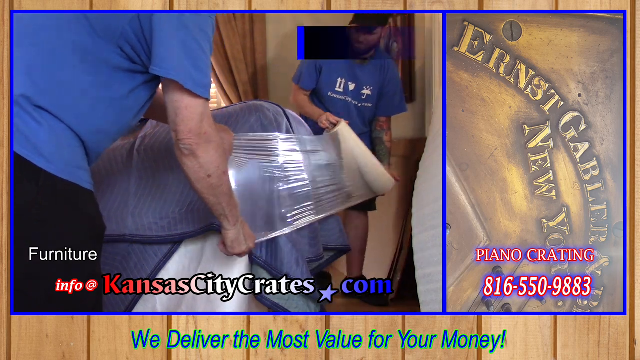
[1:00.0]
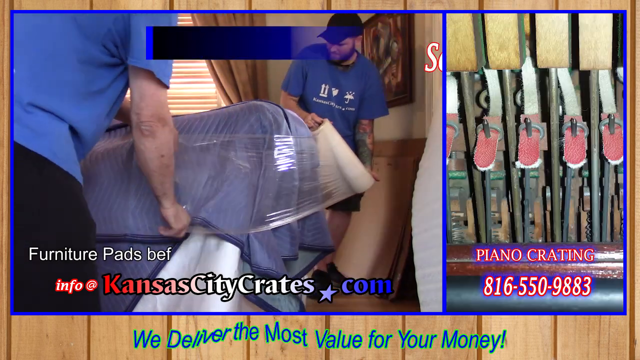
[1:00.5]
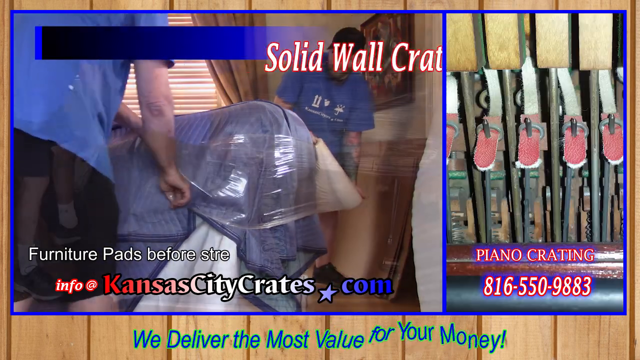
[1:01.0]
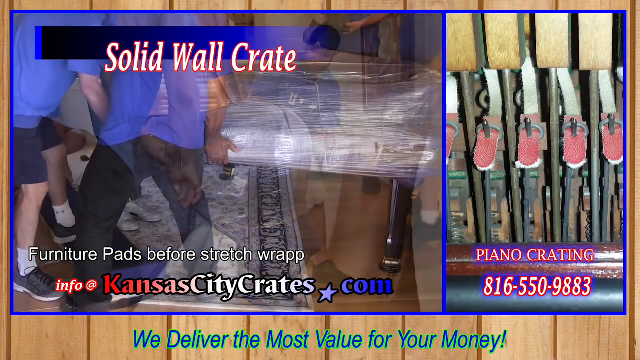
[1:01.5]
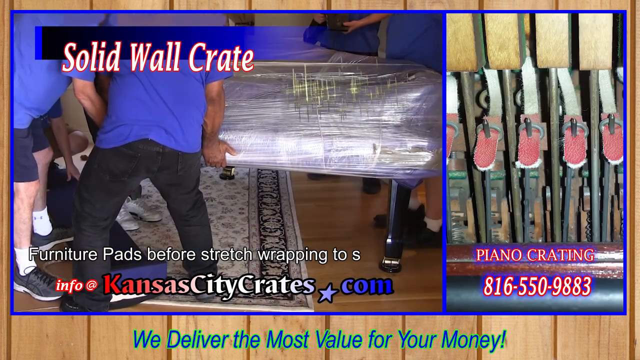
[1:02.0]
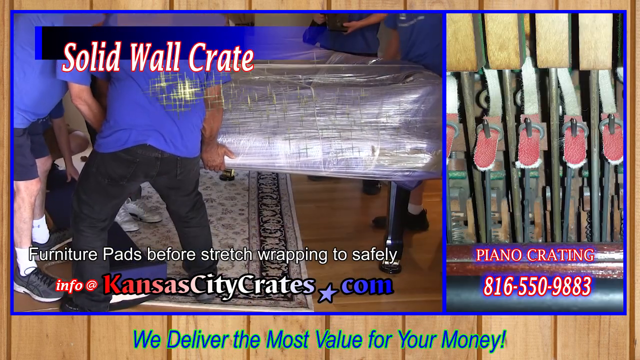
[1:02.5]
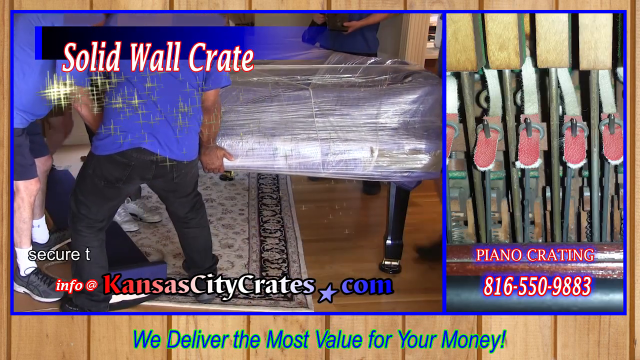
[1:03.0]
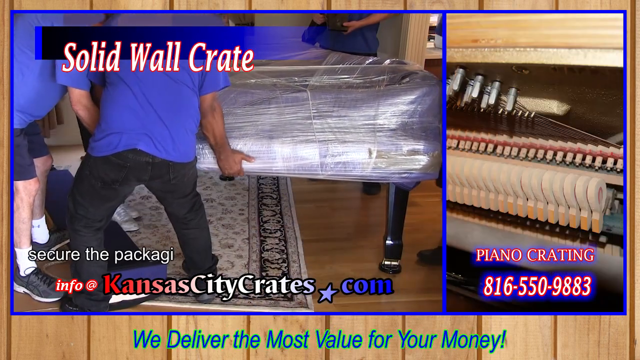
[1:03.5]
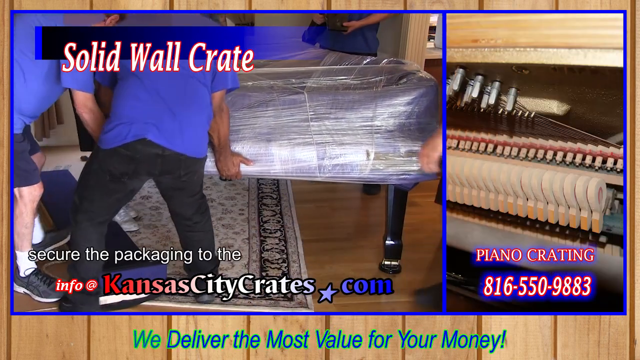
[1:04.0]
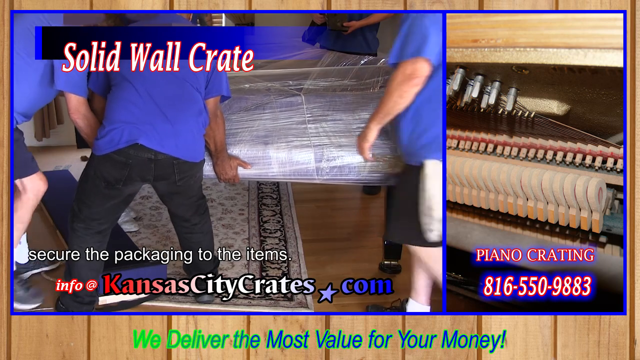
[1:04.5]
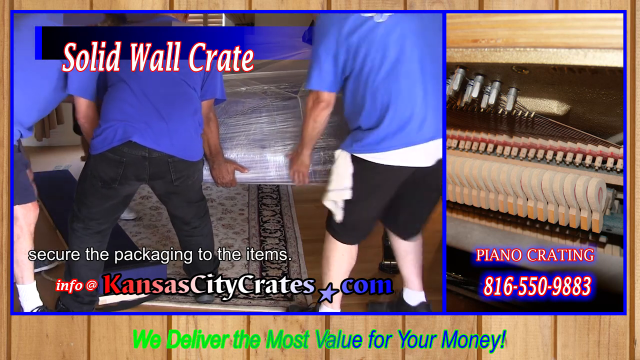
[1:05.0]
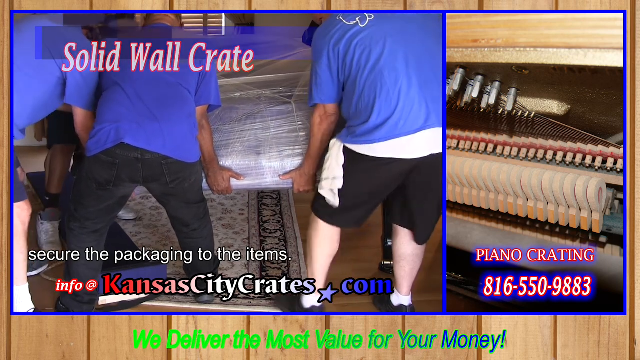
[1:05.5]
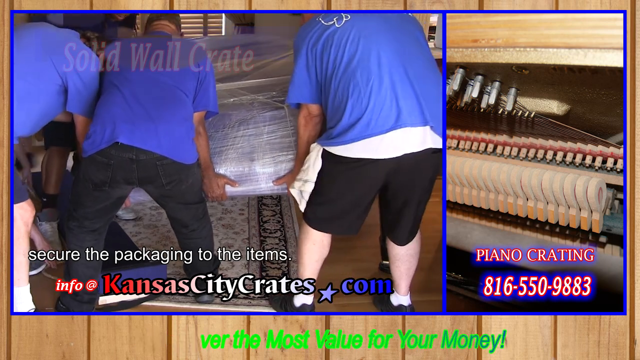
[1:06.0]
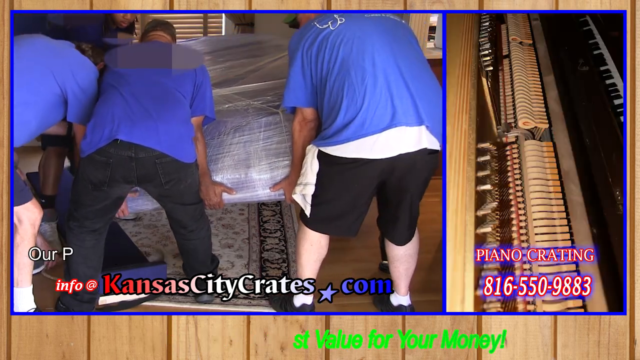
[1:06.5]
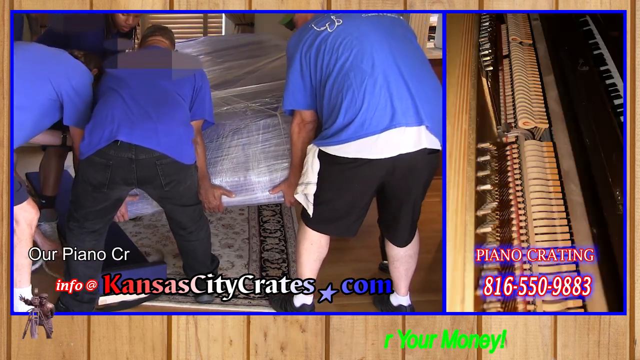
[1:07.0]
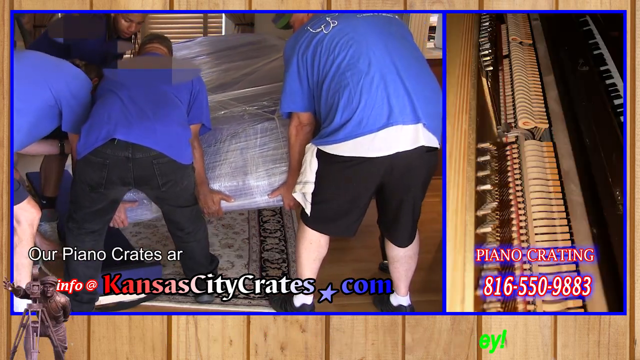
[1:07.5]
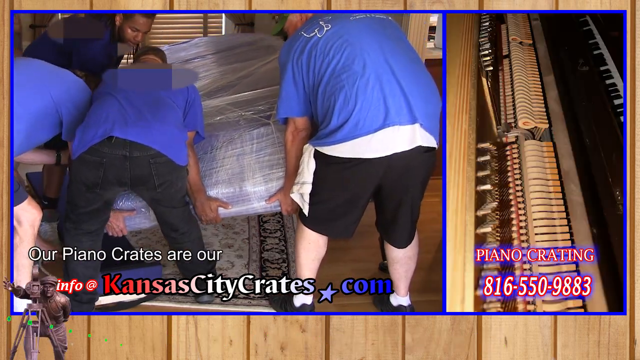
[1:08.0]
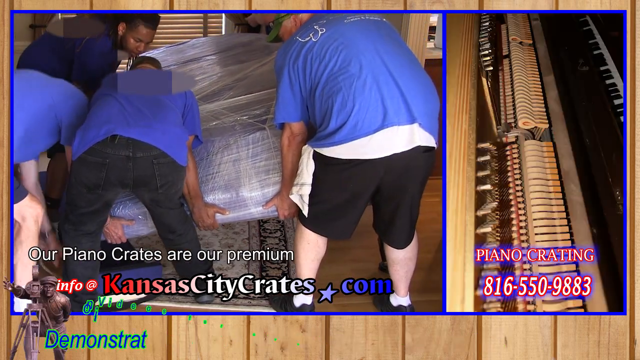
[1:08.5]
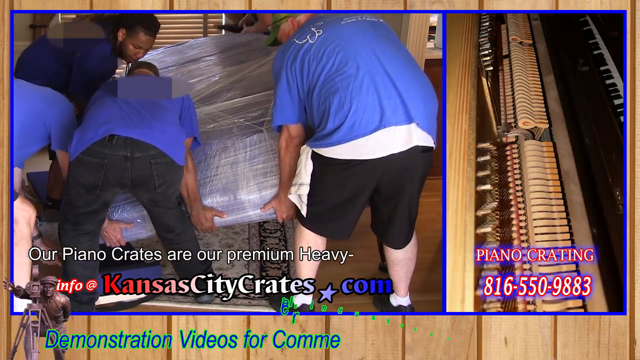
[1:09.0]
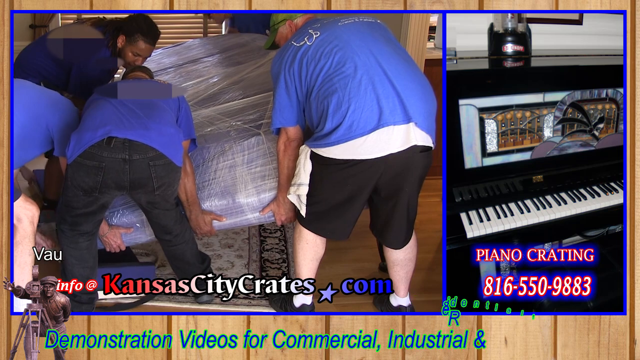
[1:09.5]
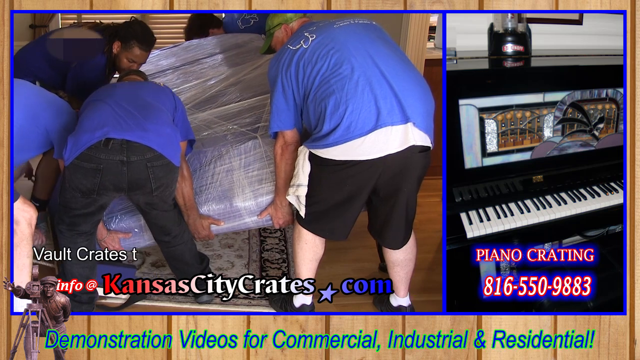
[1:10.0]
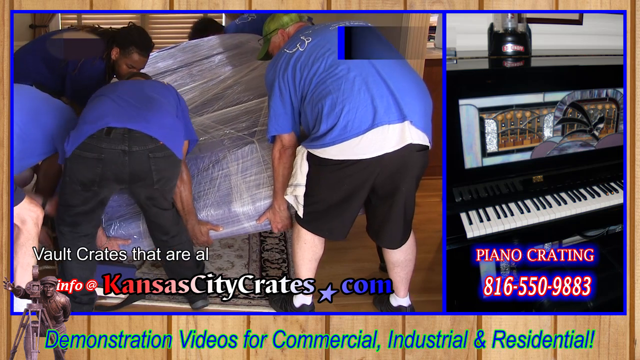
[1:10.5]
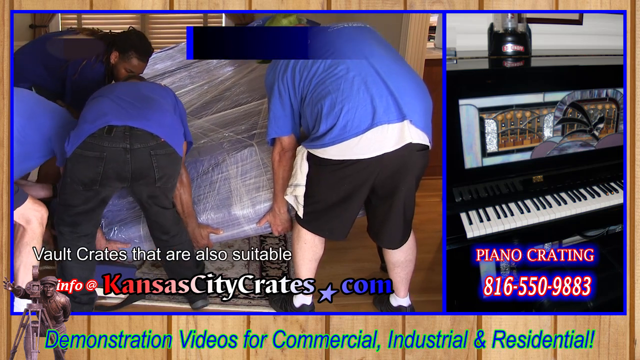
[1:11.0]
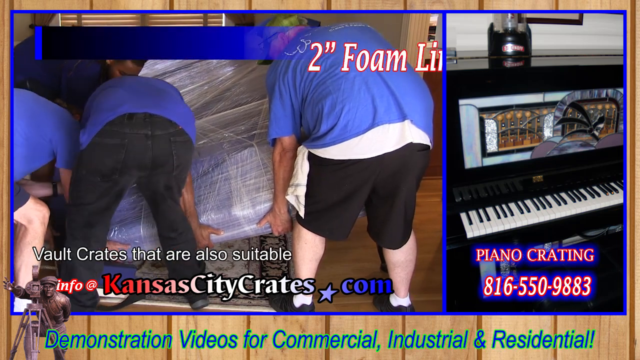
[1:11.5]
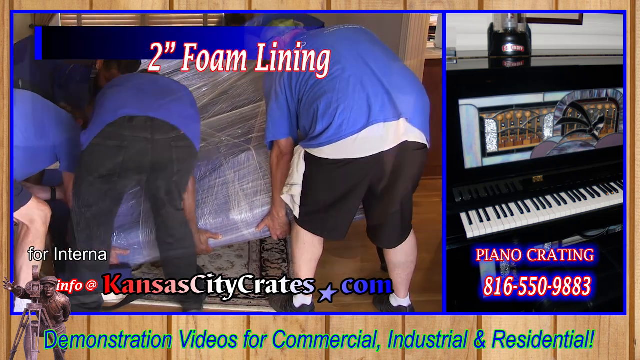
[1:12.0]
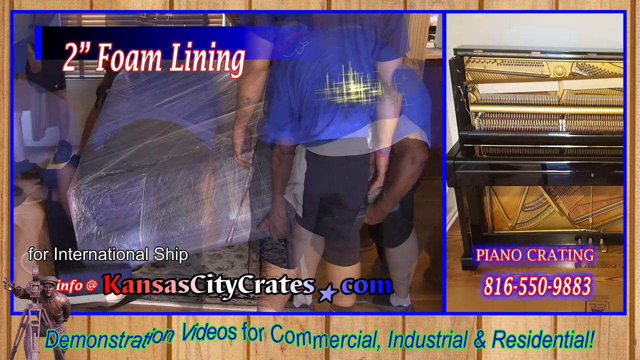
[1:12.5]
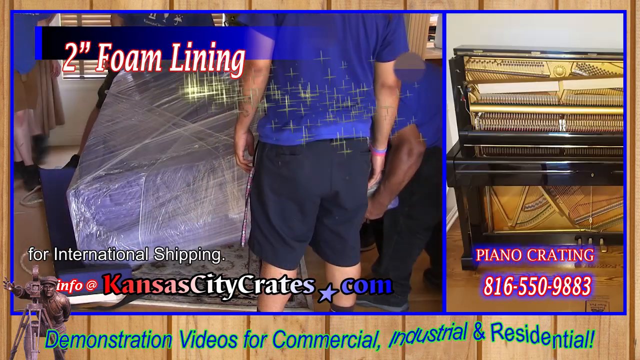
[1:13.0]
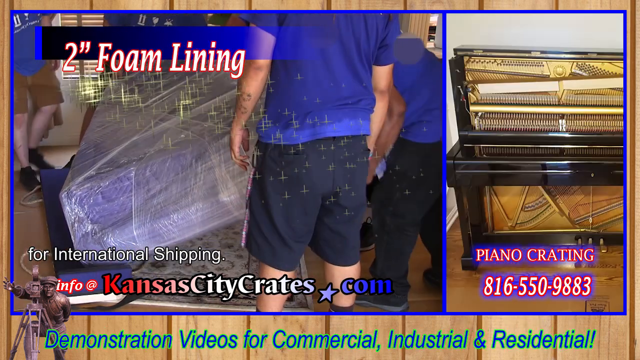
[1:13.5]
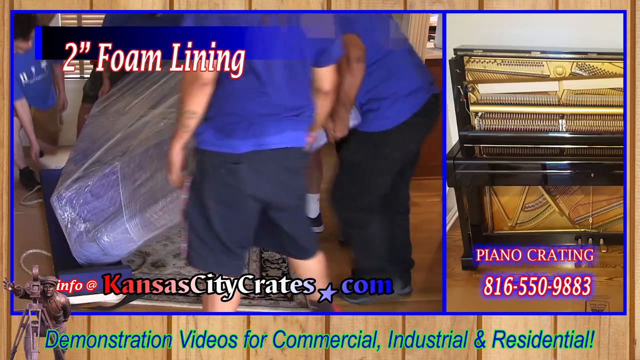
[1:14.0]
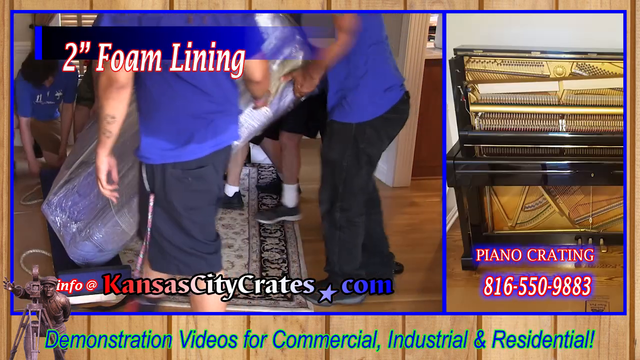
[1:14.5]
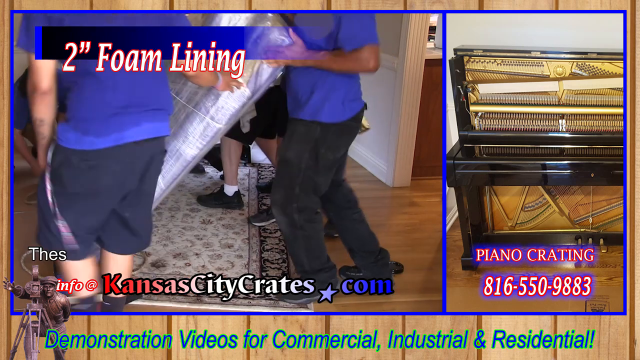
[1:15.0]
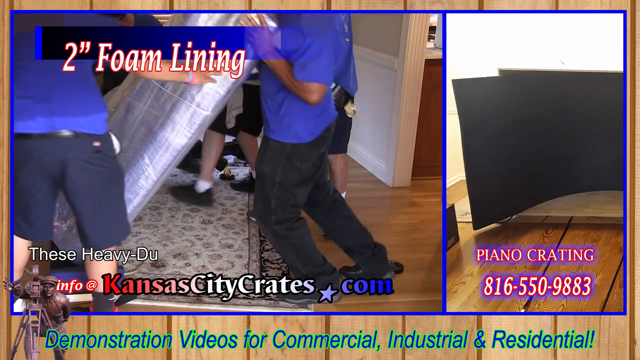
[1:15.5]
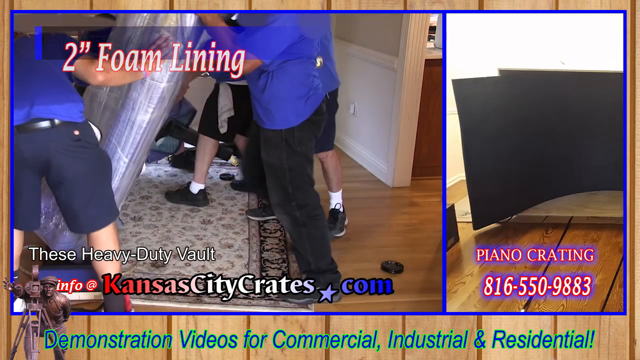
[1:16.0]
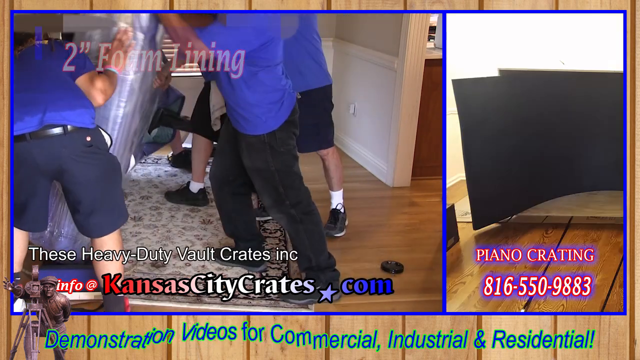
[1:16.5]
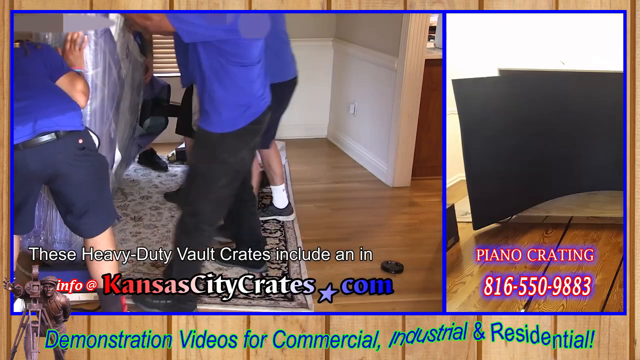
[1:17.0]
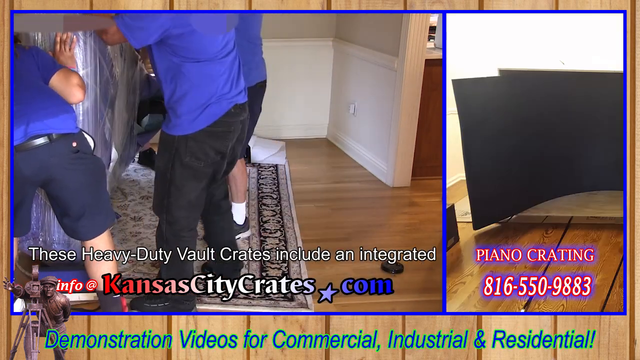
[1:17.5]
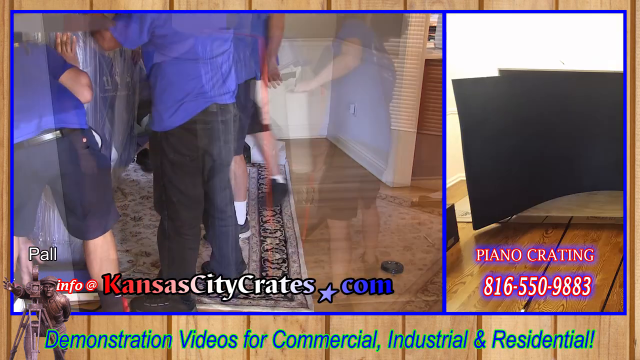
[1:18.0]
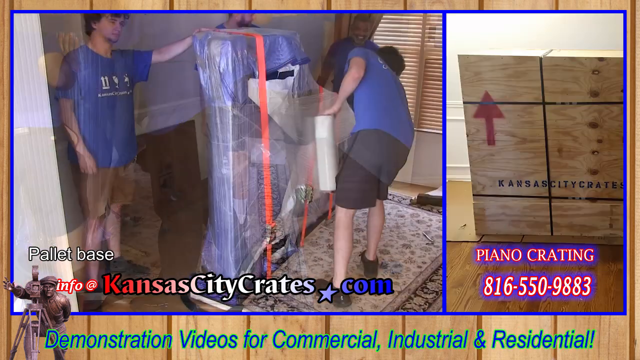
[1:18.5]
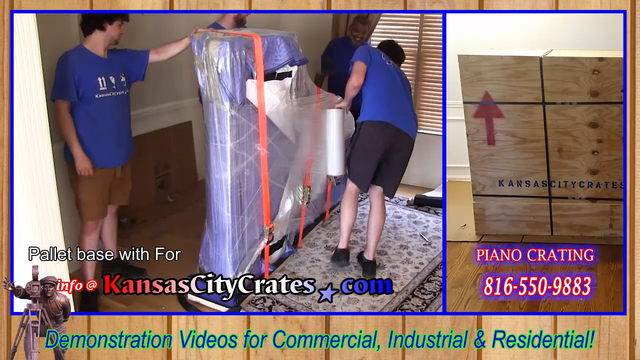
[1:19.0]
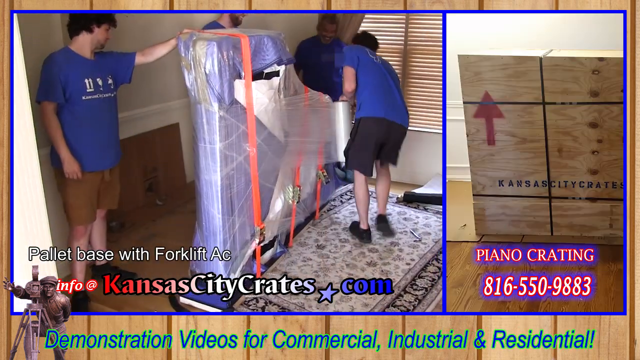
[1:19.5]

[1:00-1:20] Two white men in blue shirts, both wearing hats, continue packing the piano. After putting on the blue pads, they wrap the piano many times with plastic wrap. Text at the top reads "solid wall crate." Five men, all in blue shirts, carefully move the piano. Text reads "our piano crates are our premium heavy-duty vault crates that are also suitable for international shipping," and text at the top reads "two-inch foam lining." The men carefully place the piano onto a rug and carefully lift it toward the left of the screen. Three men in blue shirts continue wrapping the piano in thick layers of plastic. To the right are the words "piano crating" with the phone number 816-550-9883.